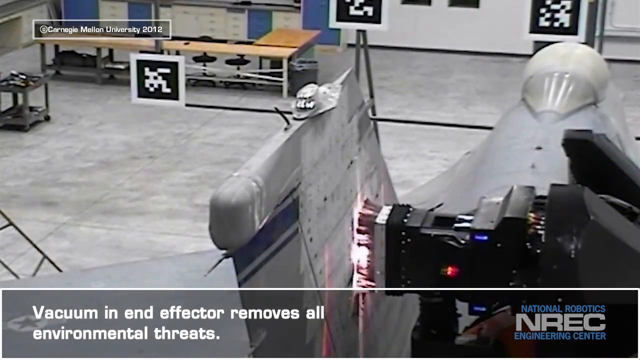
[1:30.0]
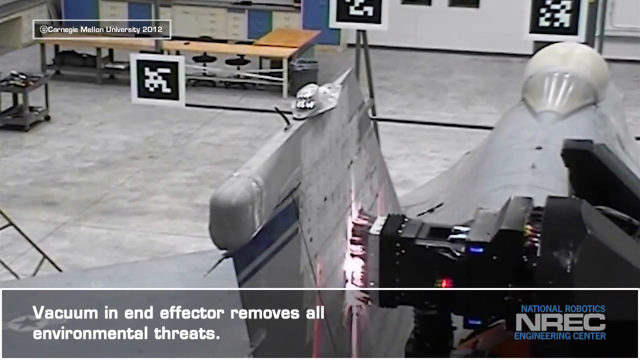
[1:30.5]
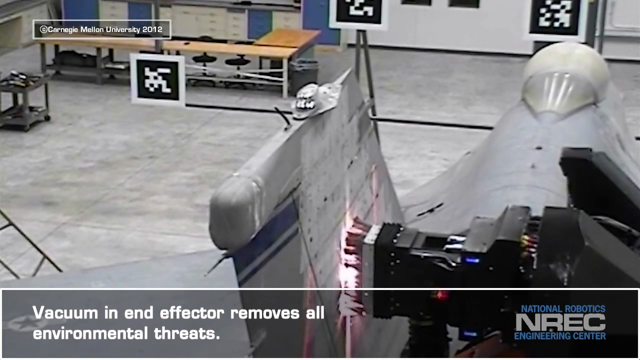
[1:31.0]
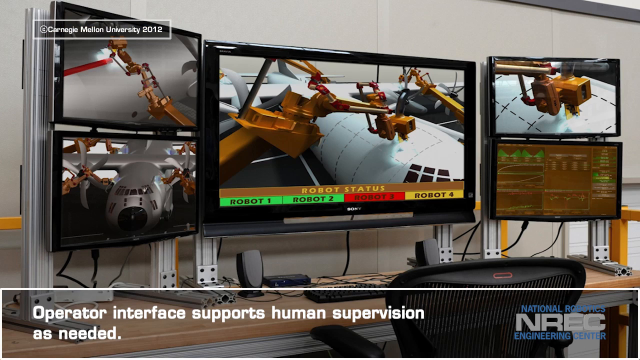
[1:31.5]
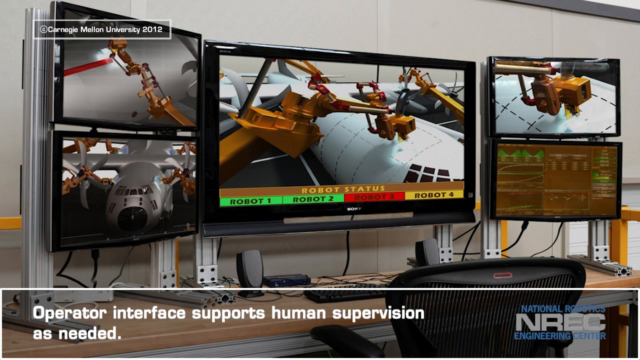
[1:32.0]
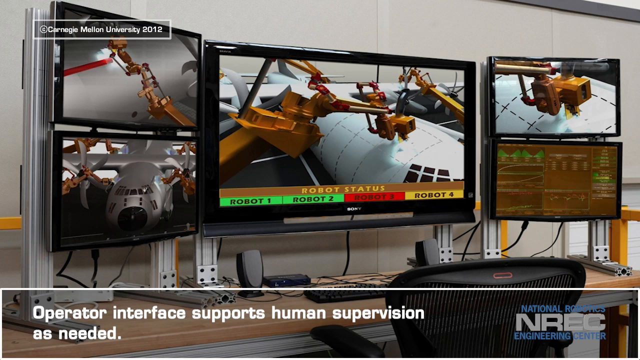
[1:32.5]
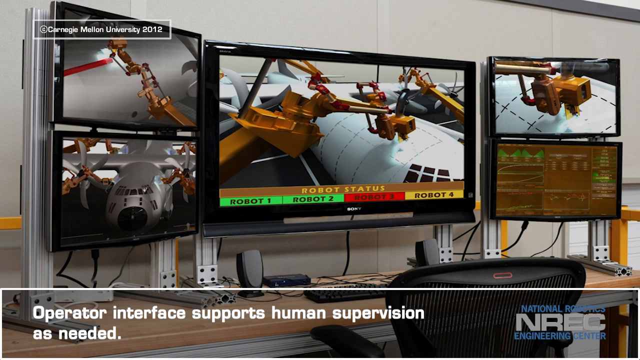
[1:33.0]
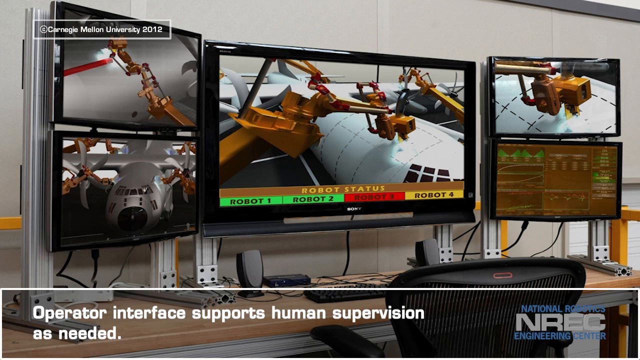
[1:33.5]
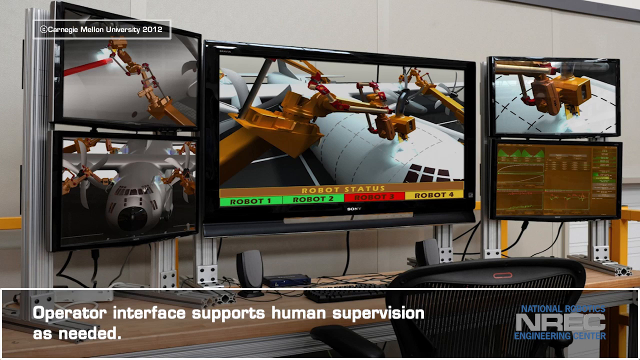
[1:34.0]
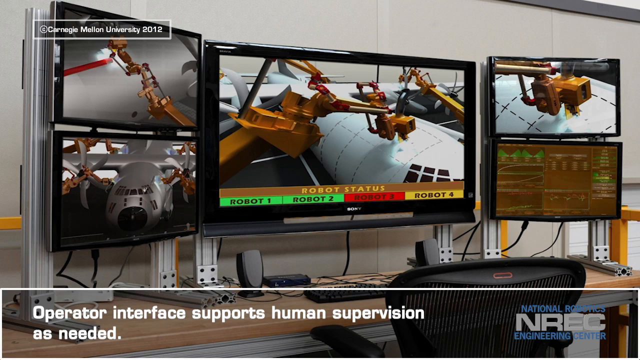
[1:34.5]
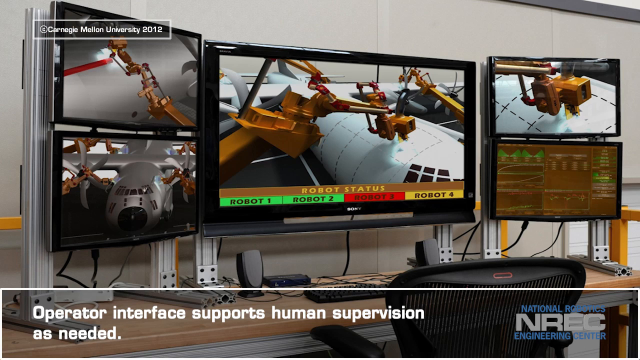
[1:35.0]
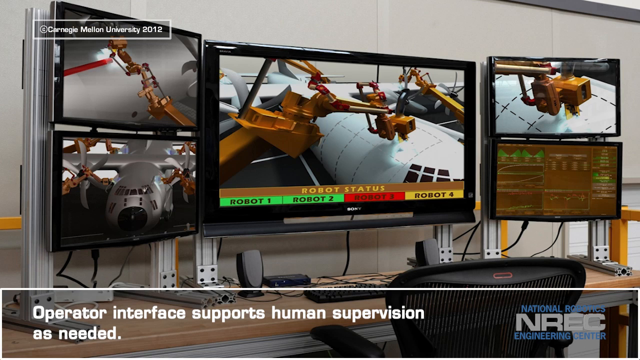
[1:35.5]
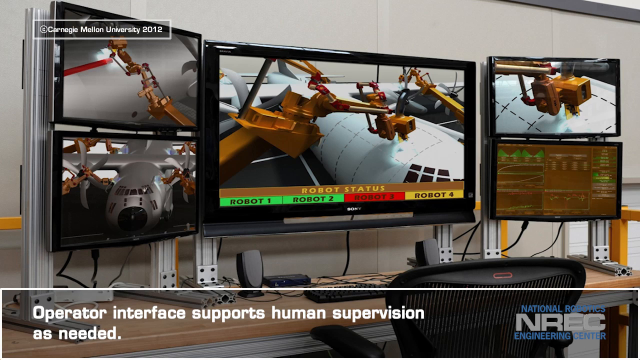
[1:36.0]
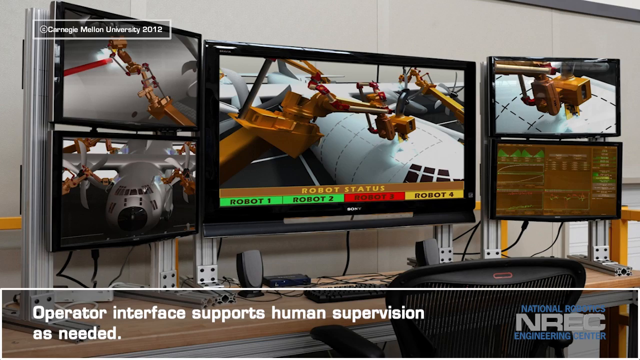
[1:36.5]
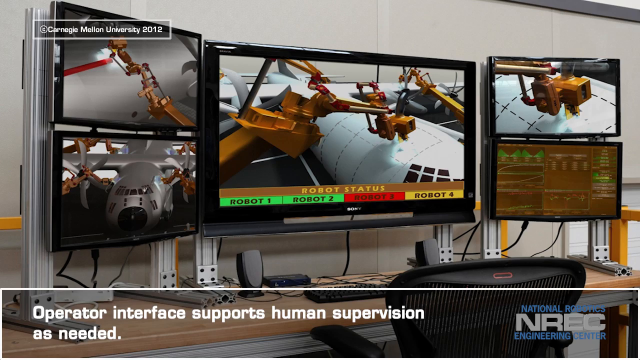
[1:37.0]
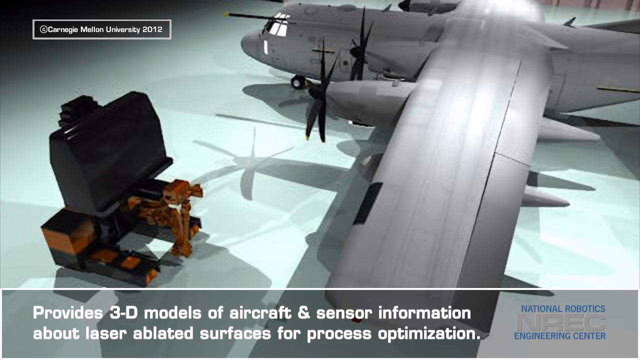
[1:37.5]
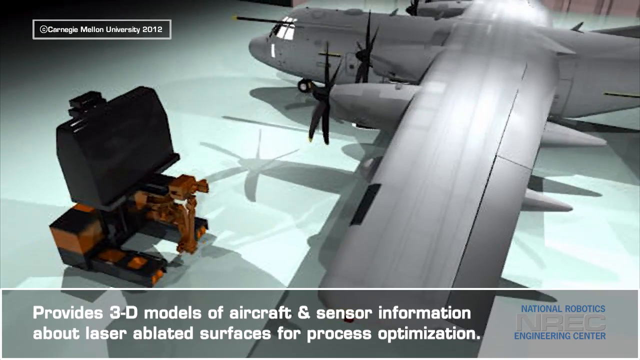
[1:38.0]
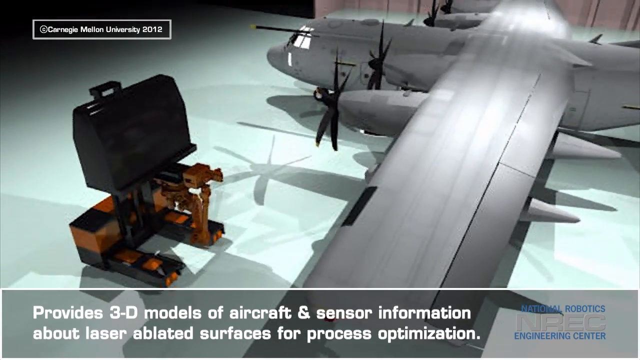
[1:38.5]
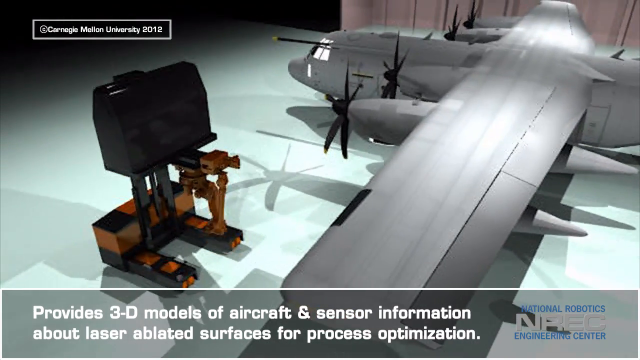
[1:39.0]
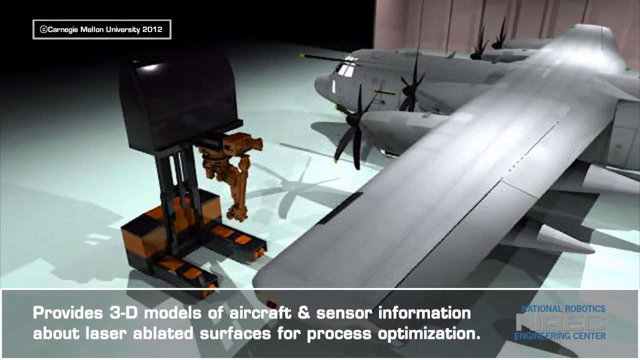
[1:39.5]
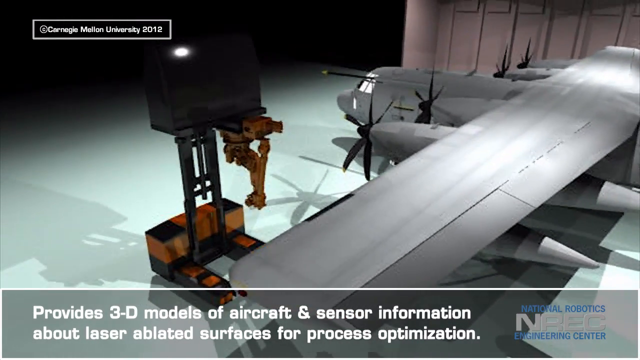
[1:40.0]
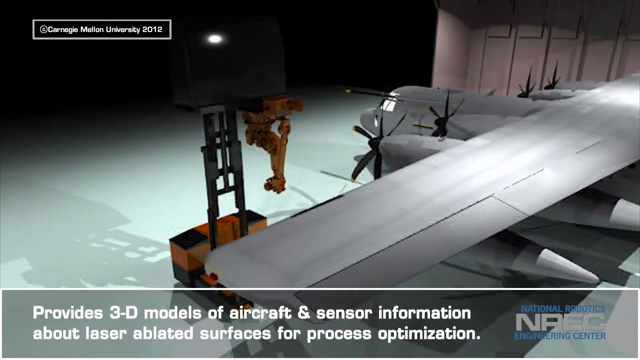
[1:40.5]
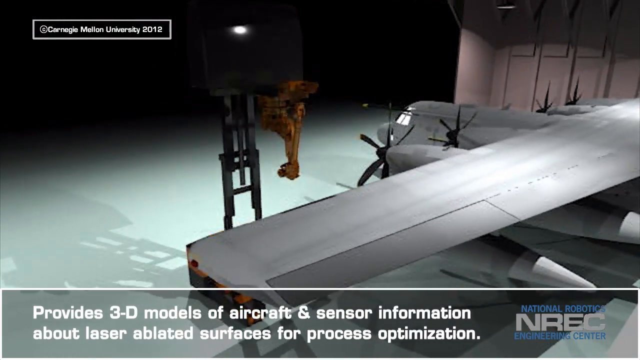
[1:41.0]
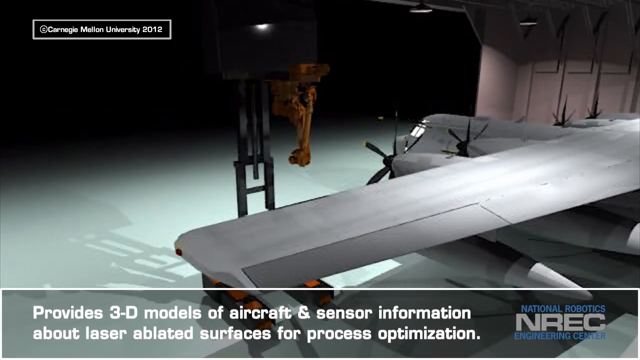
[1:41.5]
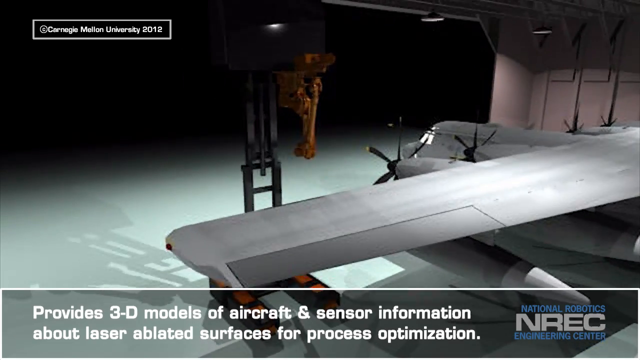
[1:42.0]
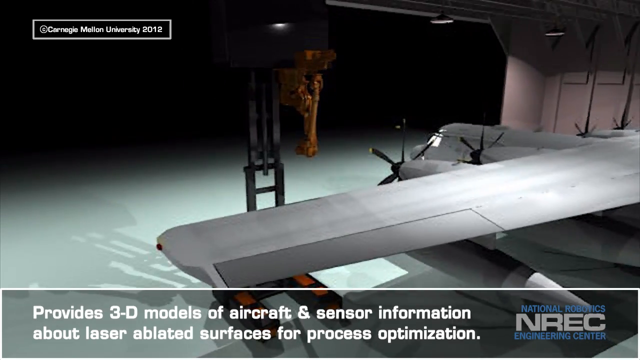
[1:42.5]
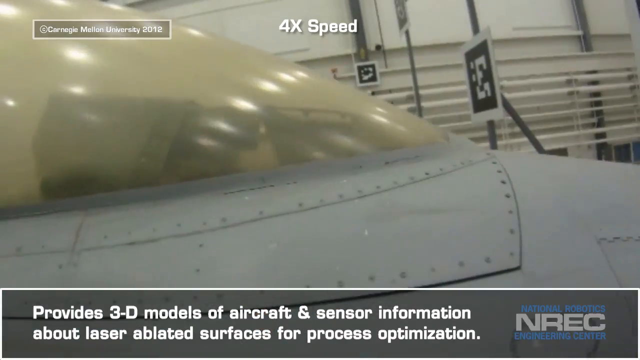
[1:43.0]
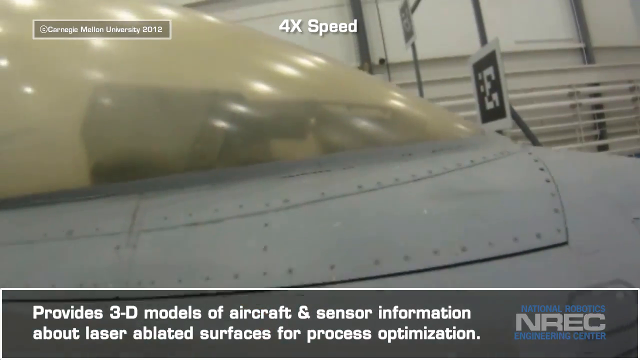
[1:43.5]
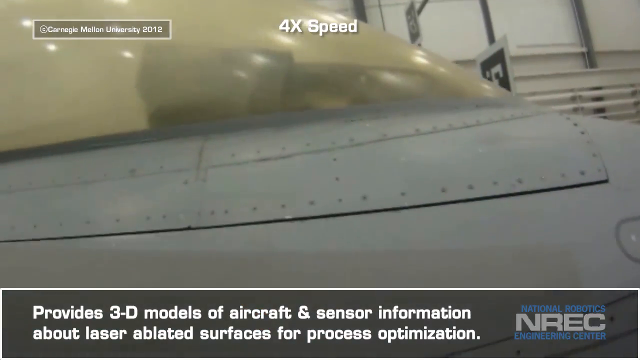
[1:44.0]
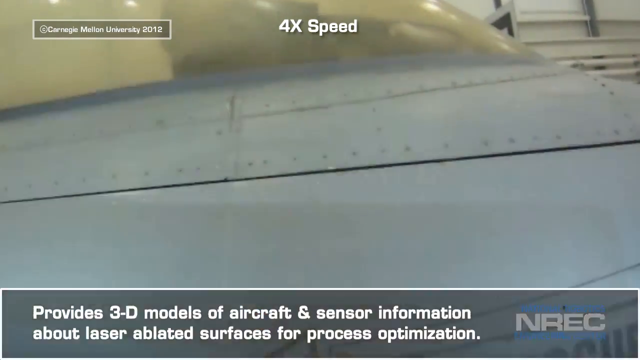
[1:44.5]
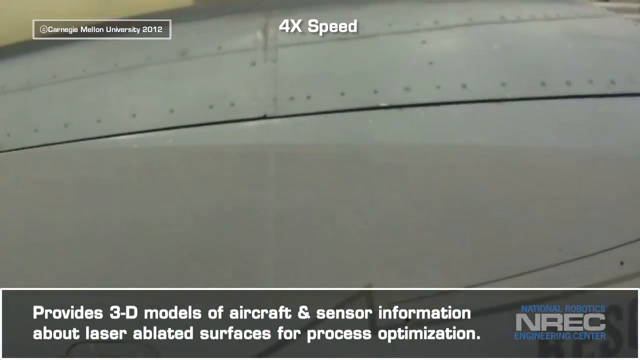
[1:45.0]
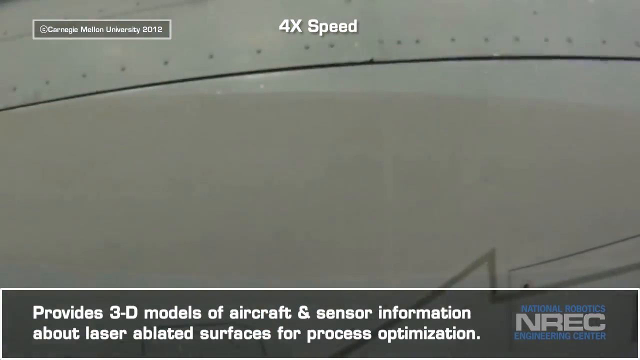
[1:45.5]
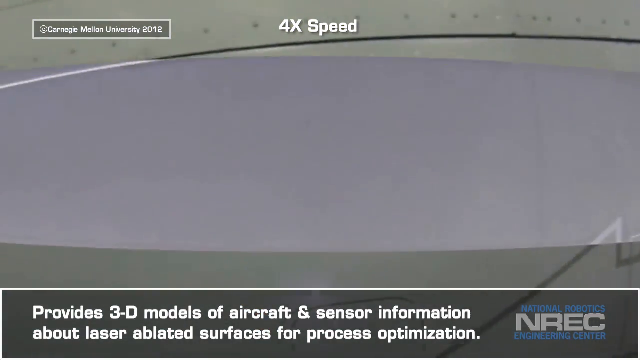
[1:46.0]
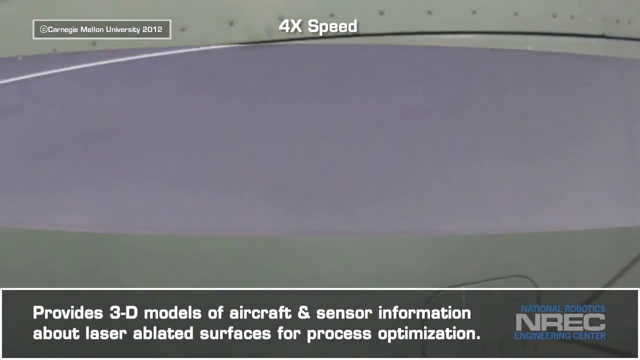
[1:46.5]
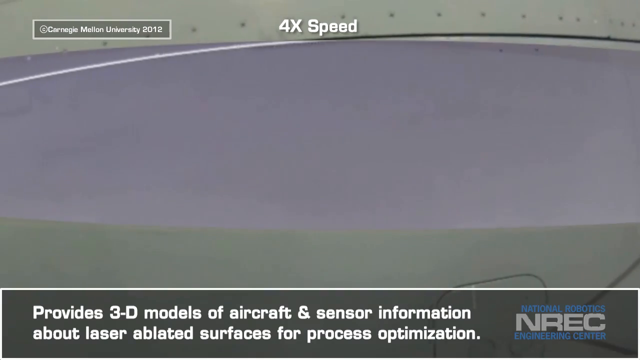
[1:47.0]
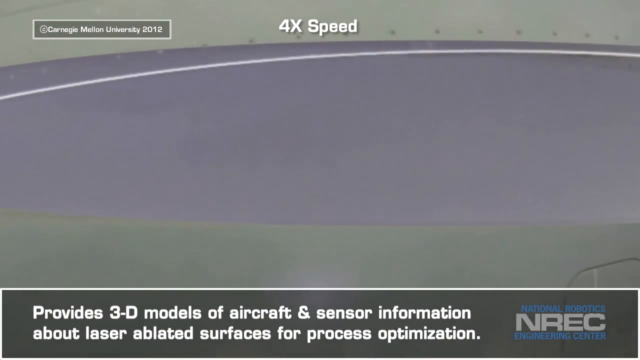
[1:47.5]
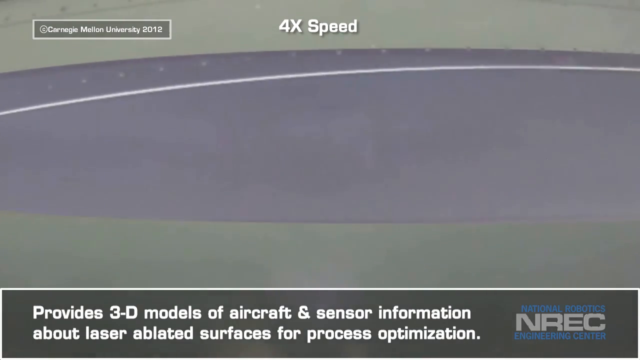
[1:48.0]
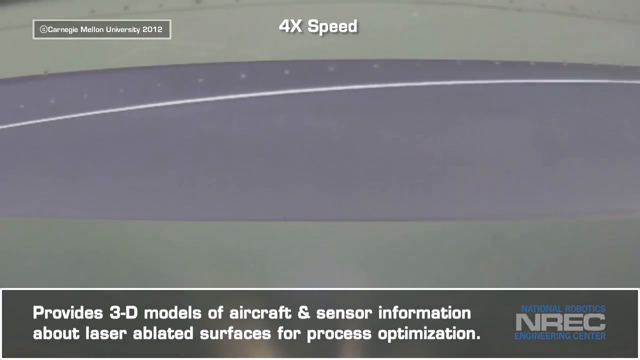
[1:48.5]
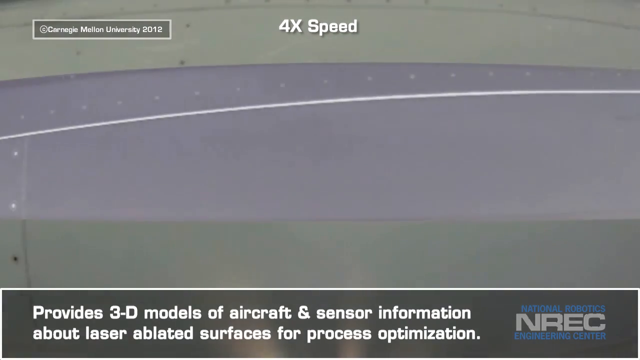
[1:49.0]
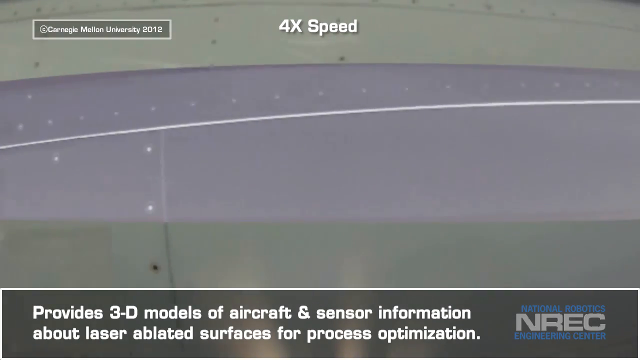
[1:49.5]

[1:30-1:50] The scene is still in the large warehouse, in the smaller room off to the side. A large wooden table is in the background, and the robotic plane is inside the hangar on the ground. The robot performs the restoration process with the laser, which flashes visibly as it removes dirt, grime and particles. A vacuum at the end of the effector is also shown. The view then moves to what appears to be a room where the robots are operated, with five television screens: two small ones on the left, a large one in the center, and two small ones on the right, all picturing the robotic arm and referring to the operator interface that supports the human supervision needed for the restoration.